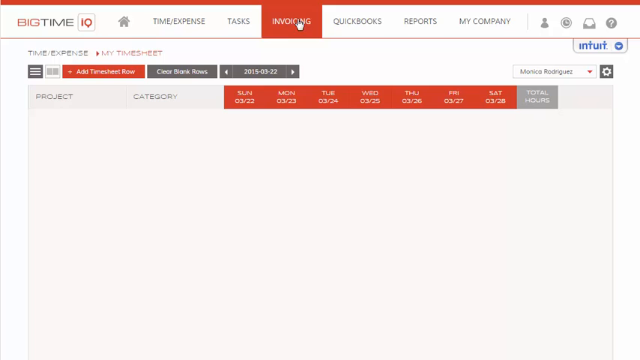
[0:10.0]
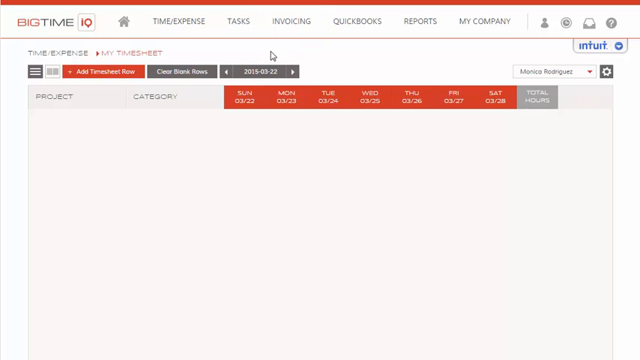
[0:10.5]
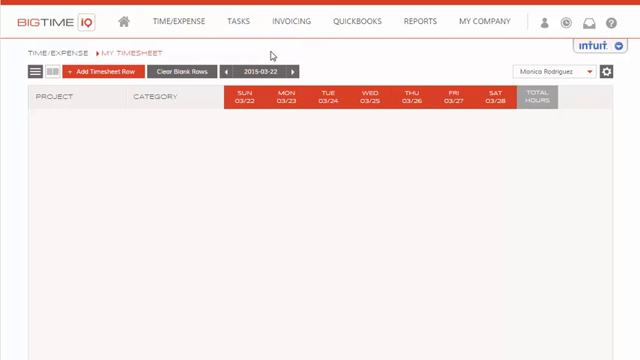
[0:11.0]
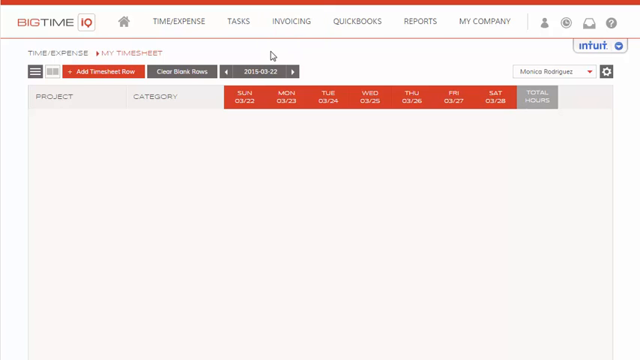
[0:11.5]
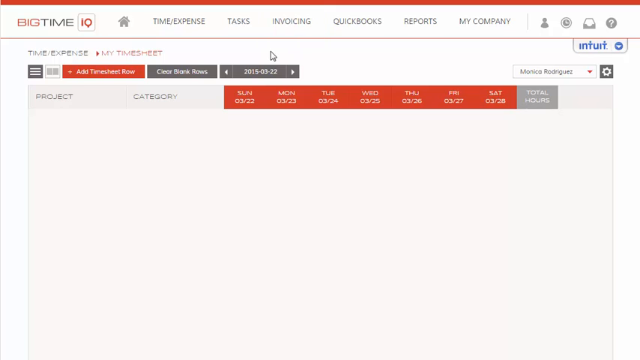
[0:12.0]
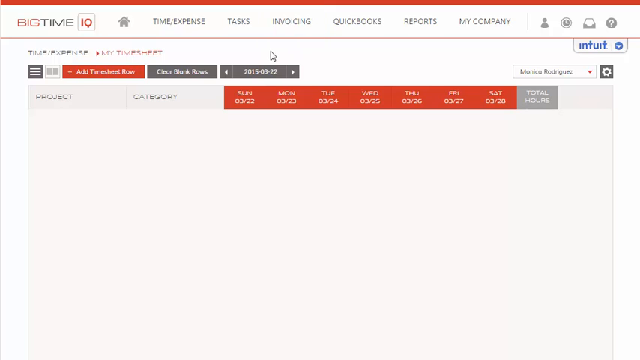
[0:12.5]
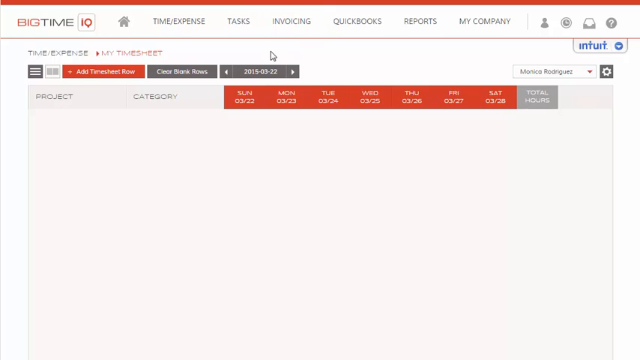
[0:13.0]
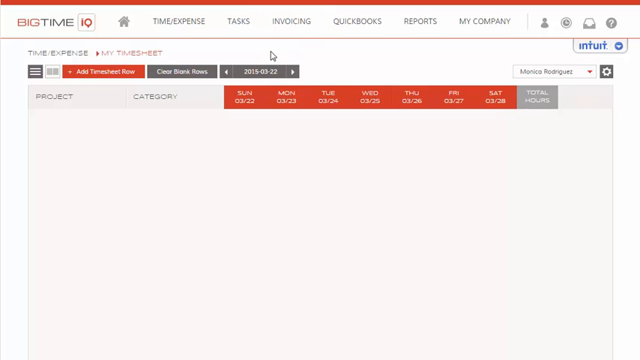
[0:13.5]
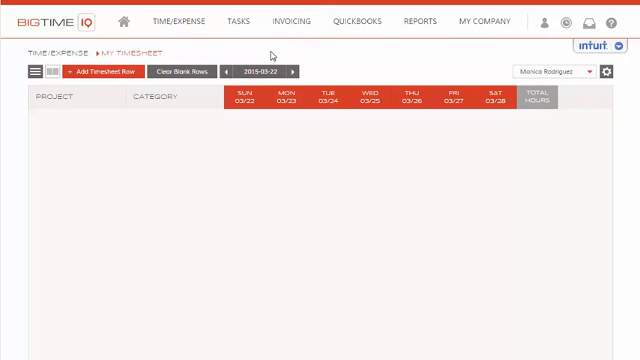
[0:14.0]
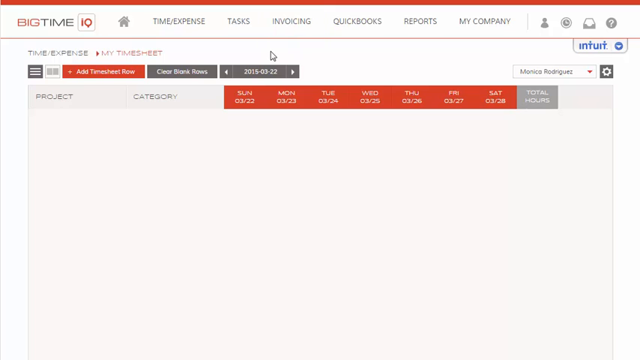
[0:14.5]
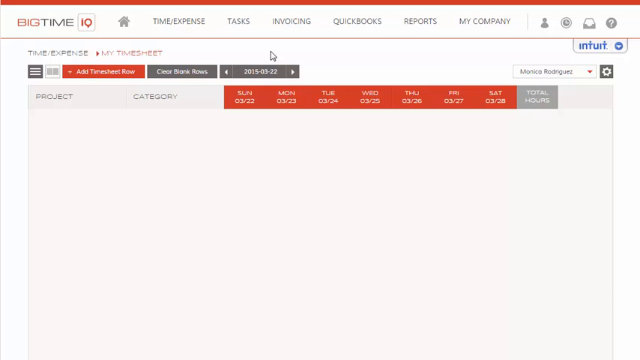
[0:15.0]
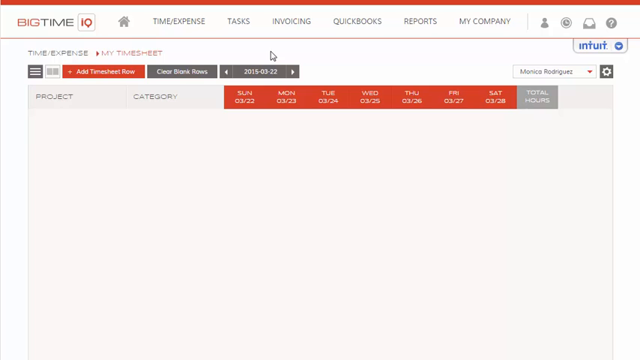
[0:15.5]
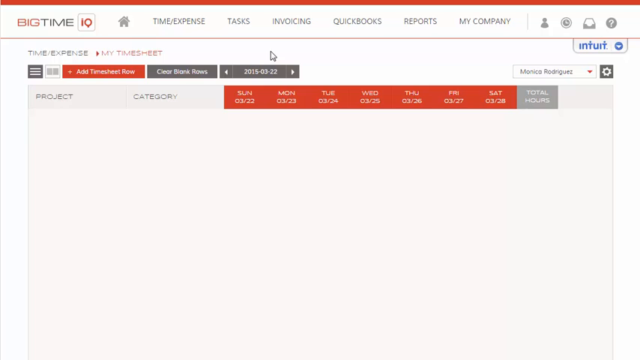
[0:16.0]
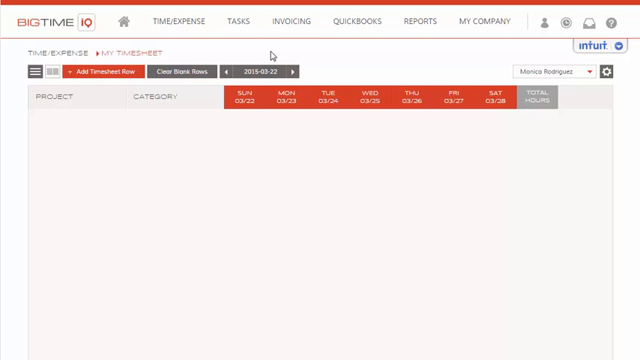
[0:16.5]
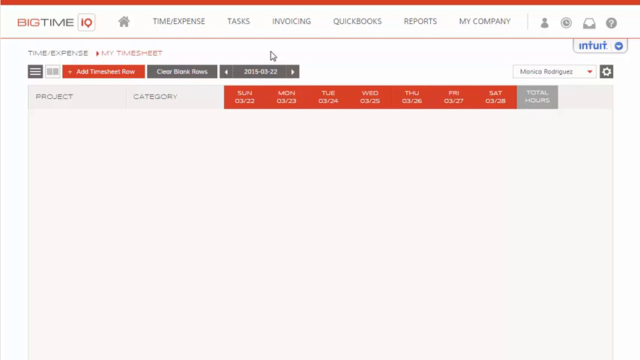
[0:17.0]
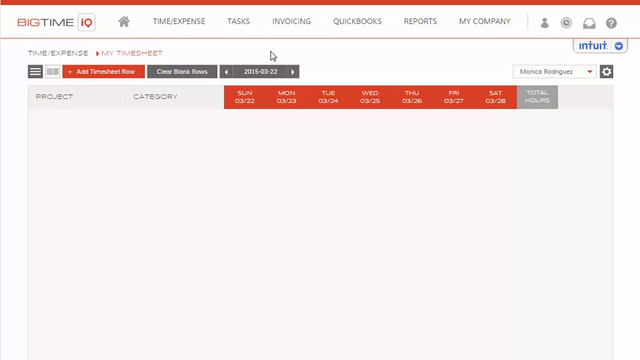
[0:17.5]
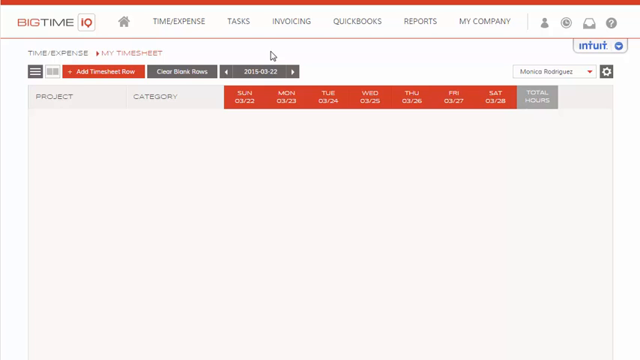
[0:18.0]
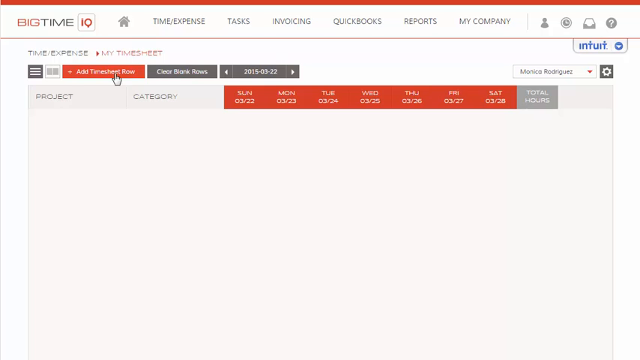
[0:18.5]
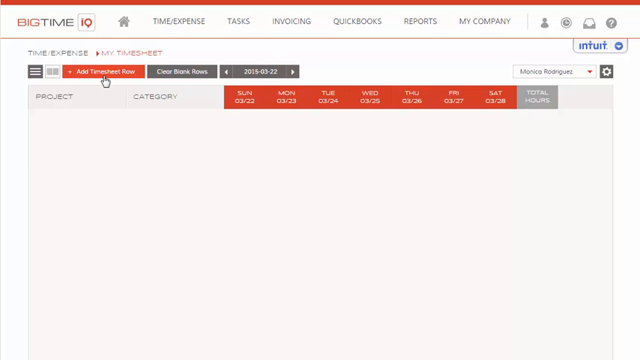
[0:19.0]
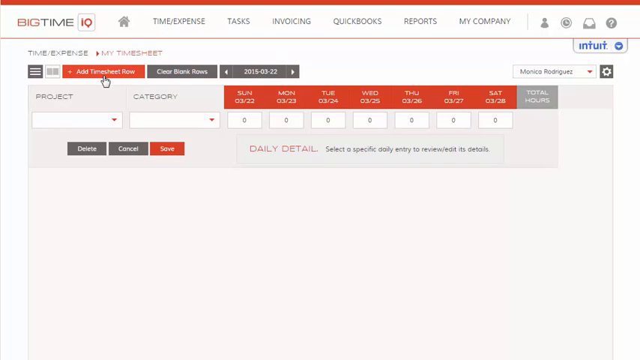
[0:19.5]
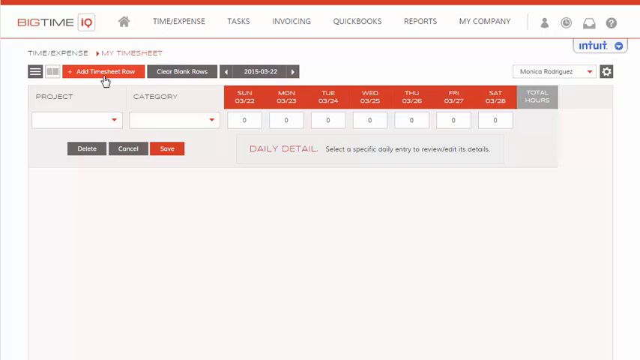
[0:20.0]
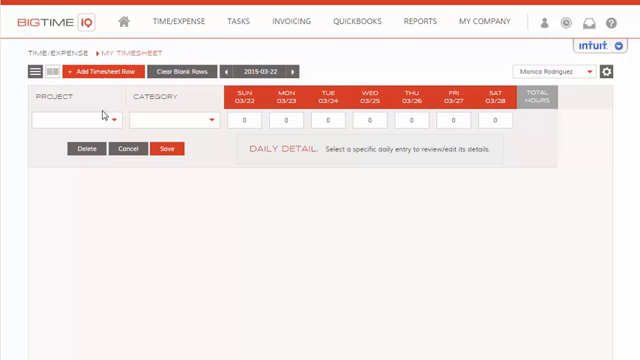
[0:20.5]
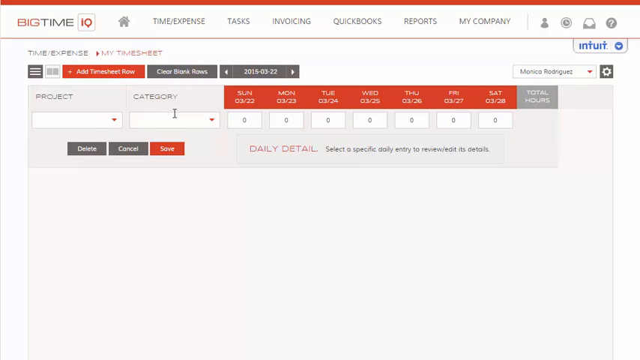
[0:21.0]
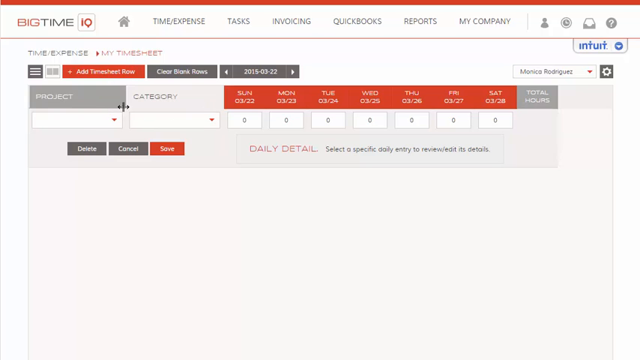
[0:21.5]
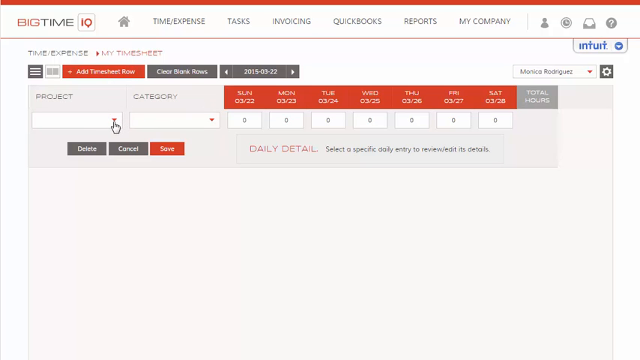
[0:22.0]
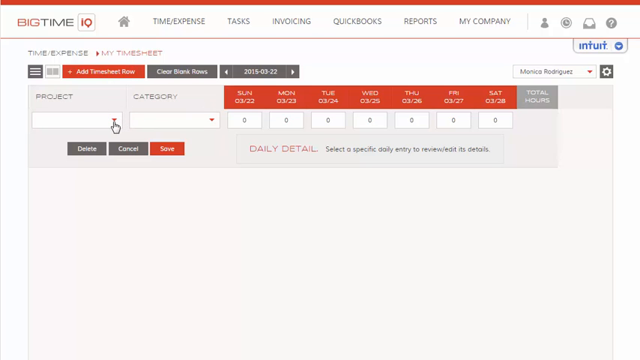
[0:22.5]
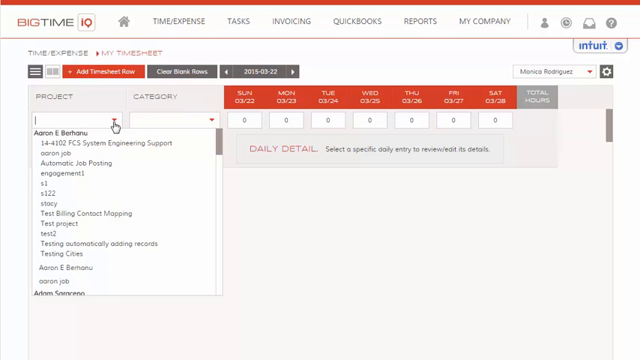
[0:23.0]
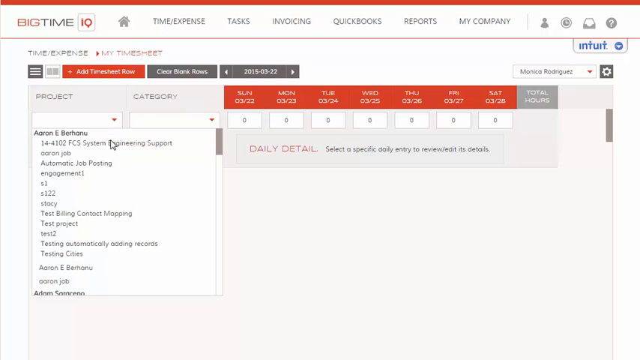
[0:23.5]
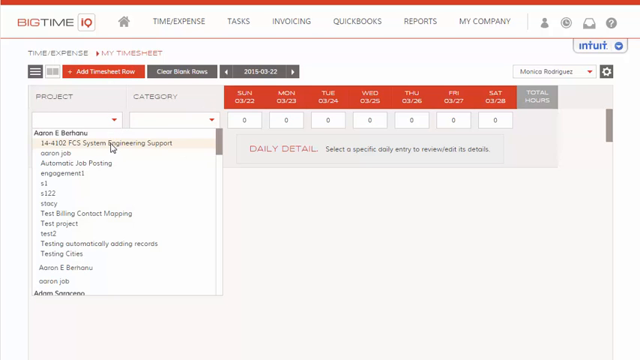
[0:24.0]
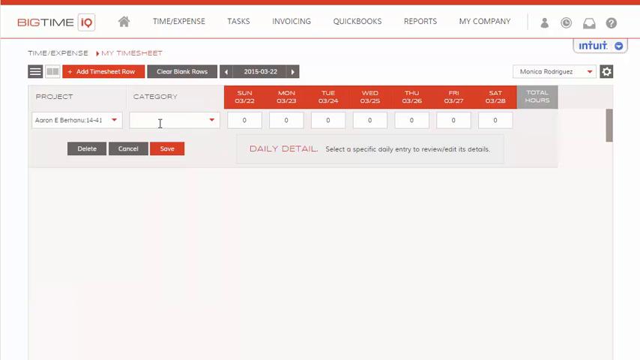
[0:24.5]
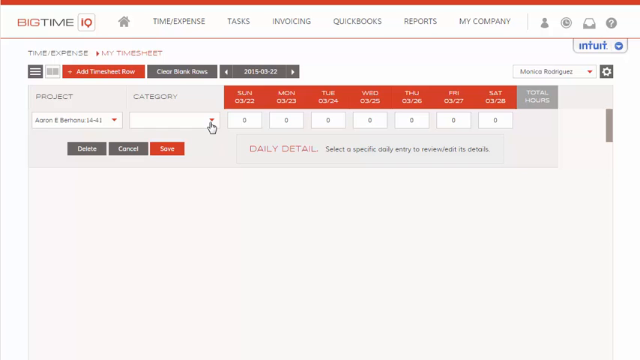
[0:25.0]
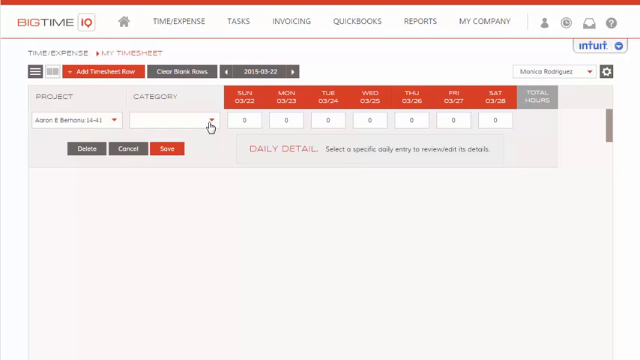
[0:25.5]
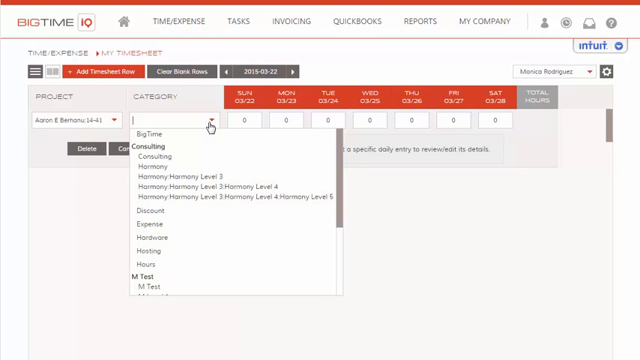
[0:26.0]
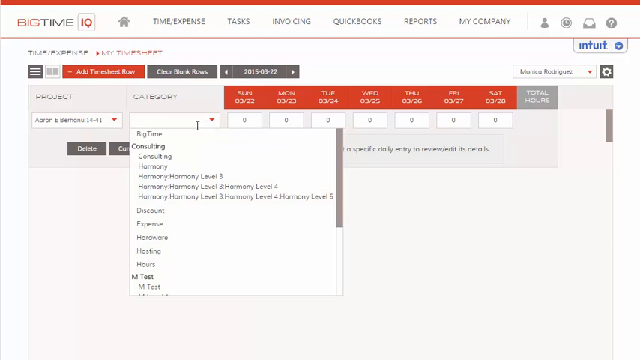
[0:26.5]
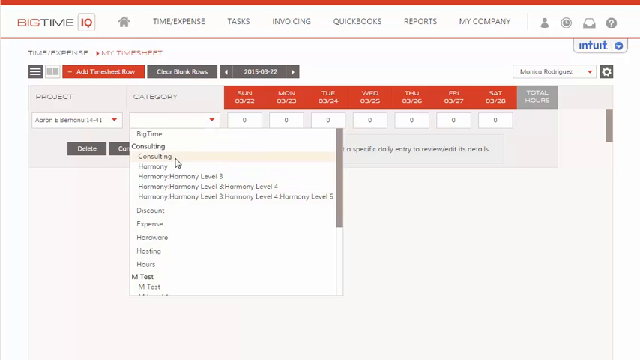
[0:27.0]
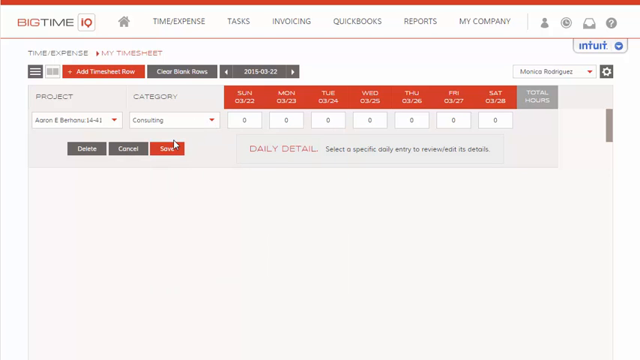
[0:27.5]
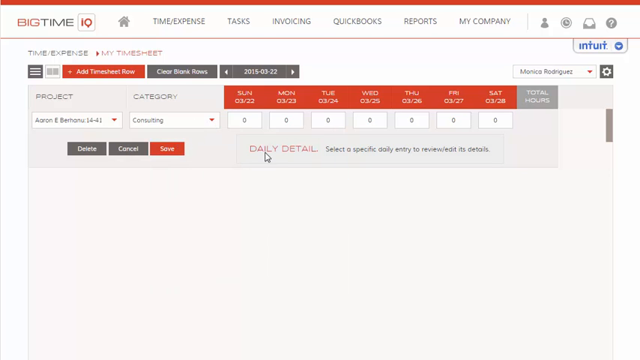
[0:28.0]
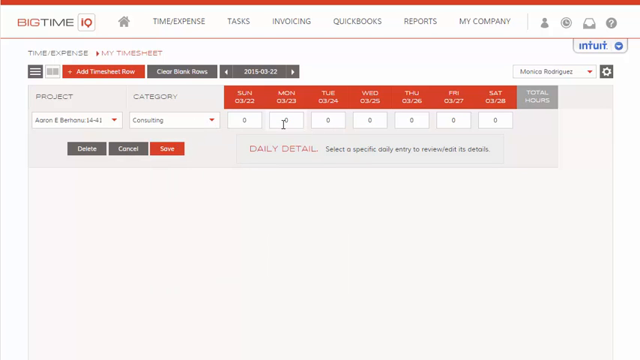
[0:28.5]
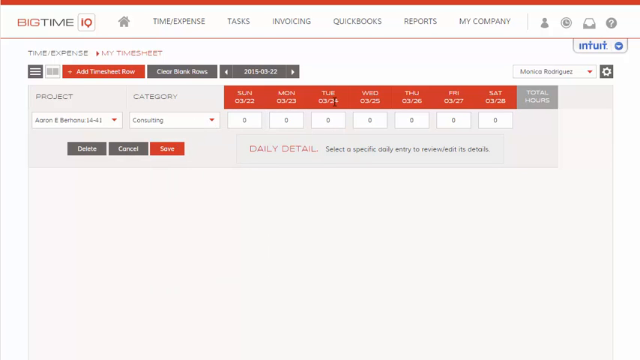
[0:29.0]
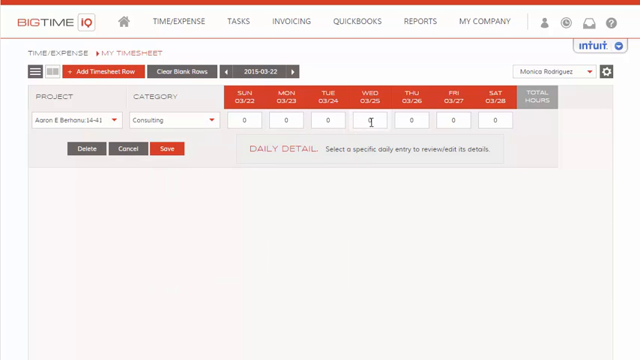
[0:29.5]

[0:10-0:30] The user clicks on invoicing. On the timesheets page, which reads "my timesheet," nothing appears to have been entered. There are columns for project and category, followed by Sunday 322, Monday 323, Tuesday 324, Wednesday 325, Thursday 326, Friday 327 and Saturday 328, plus total hours, all empty. The name "Monica Rodriguez" is at the top. The user clicks the "add timesheet row" button, and a row appears with a project drop-down menu, a category drop-down menu, and a zero under each of the dates, which look editable. Text reads "daily detail. Select a specific daily entry to review, edit its details." The user clicks the project field, a list of options drops down, and they select "Andrew E. Bernthal, 1441." They then open the category menu, where a list of options also drops down, and select consulting. Finally they go to Wednesday and start to change the entry.